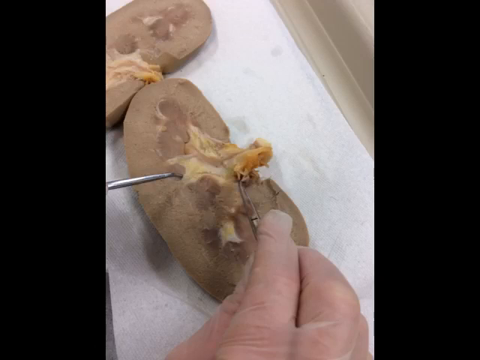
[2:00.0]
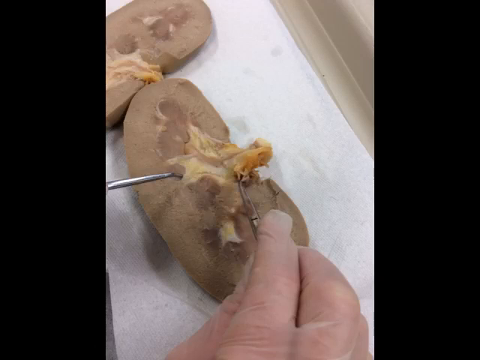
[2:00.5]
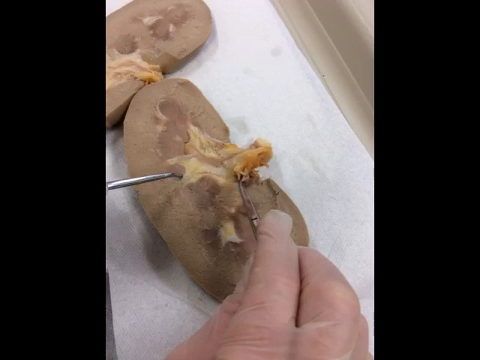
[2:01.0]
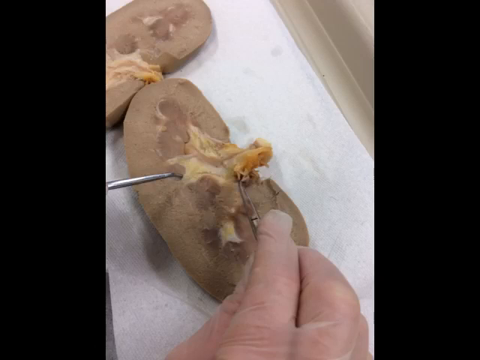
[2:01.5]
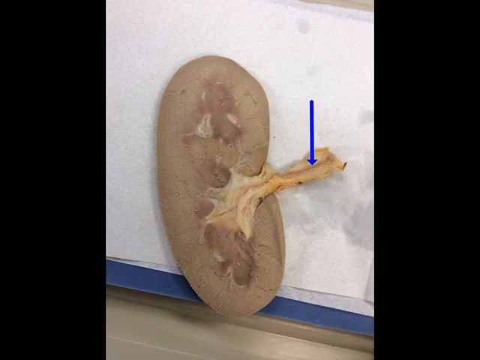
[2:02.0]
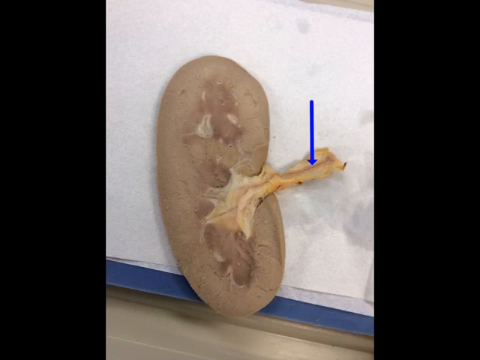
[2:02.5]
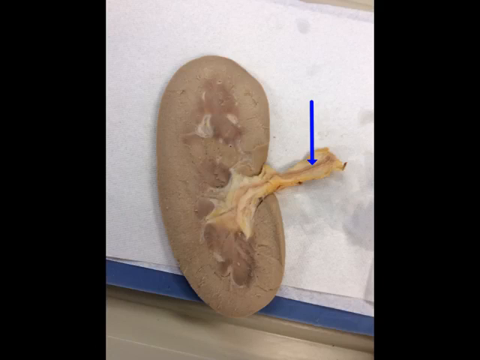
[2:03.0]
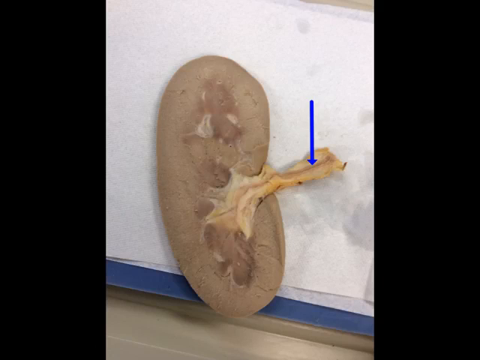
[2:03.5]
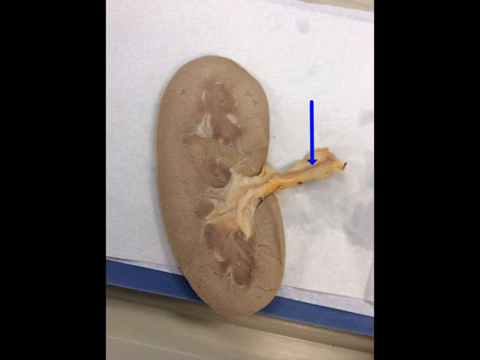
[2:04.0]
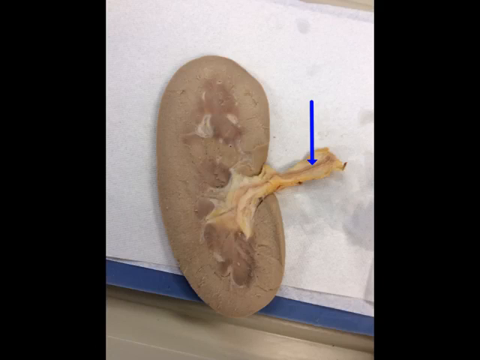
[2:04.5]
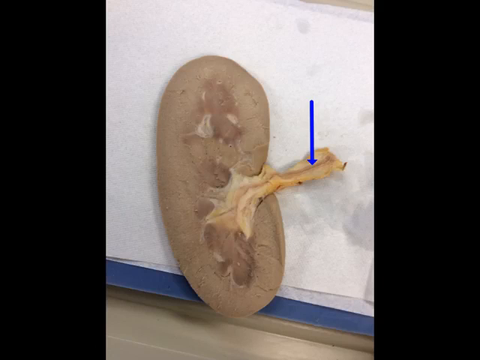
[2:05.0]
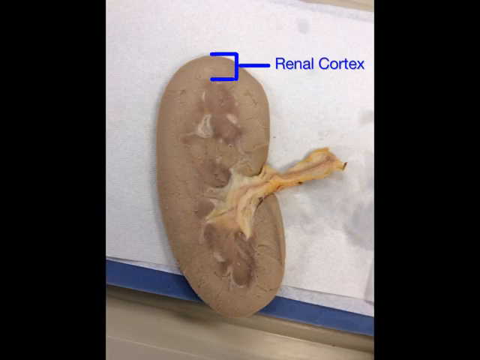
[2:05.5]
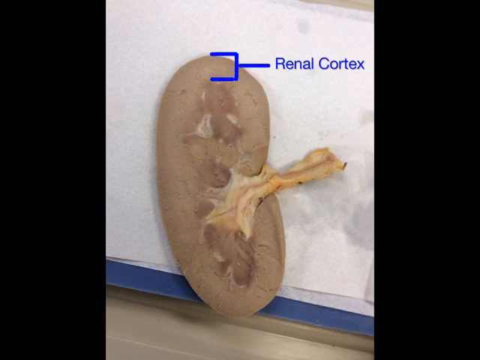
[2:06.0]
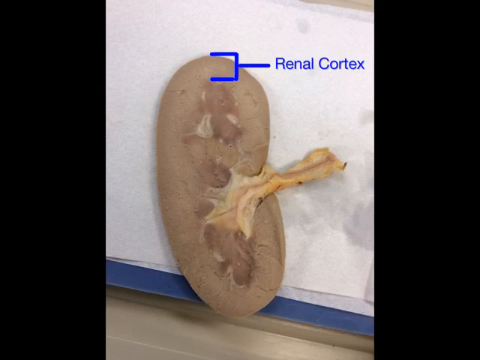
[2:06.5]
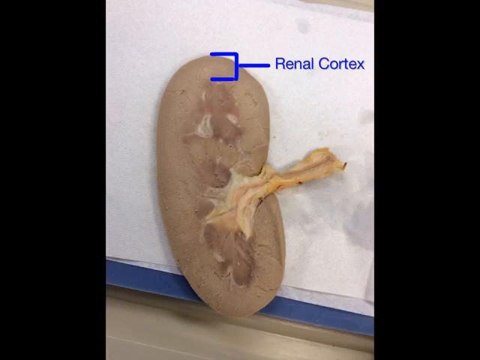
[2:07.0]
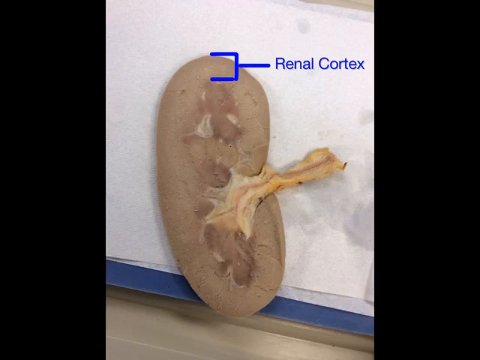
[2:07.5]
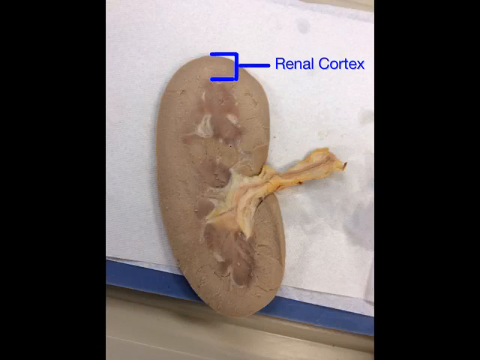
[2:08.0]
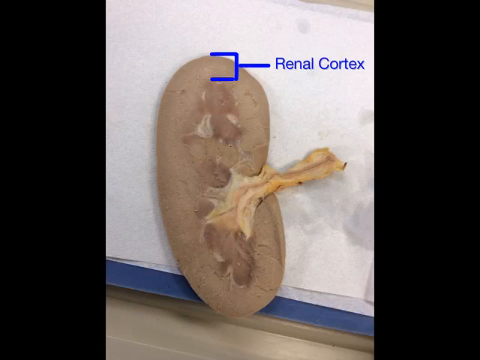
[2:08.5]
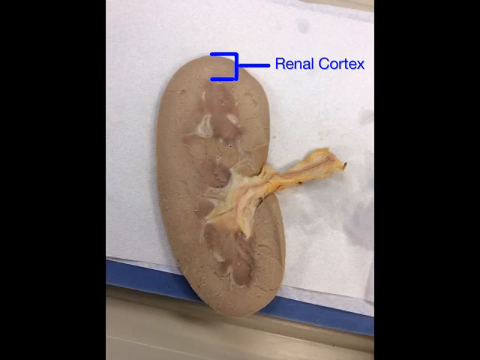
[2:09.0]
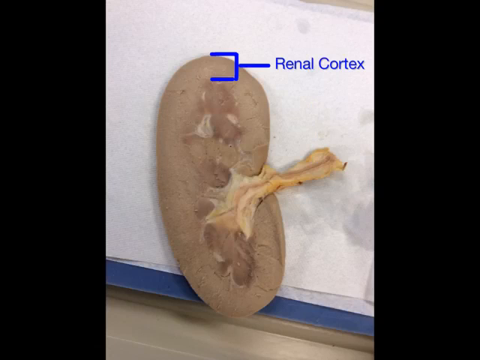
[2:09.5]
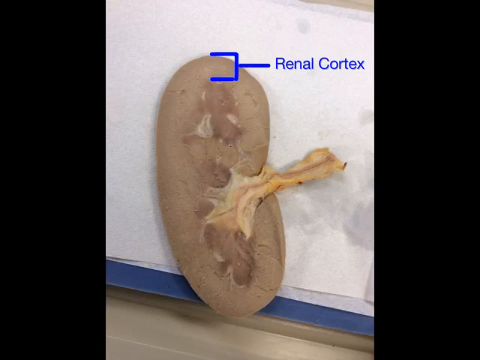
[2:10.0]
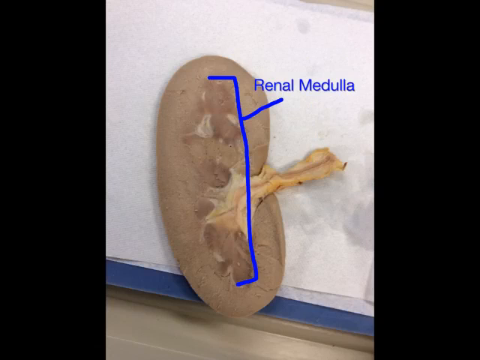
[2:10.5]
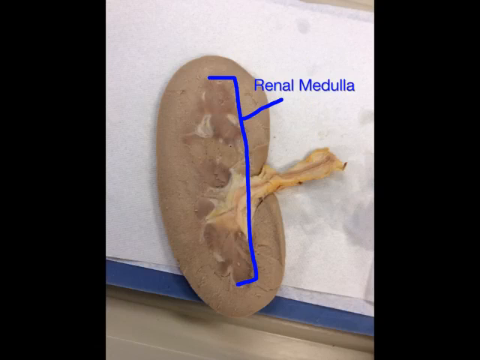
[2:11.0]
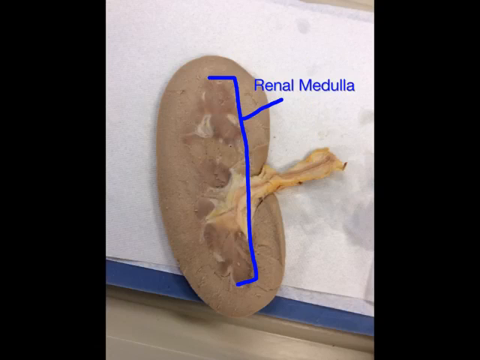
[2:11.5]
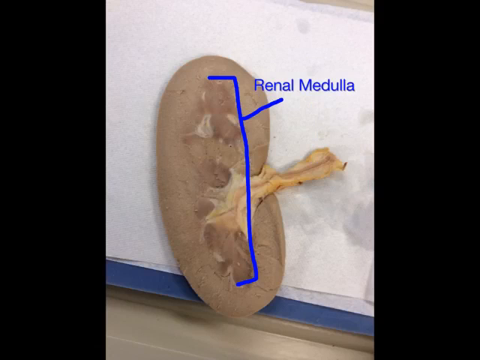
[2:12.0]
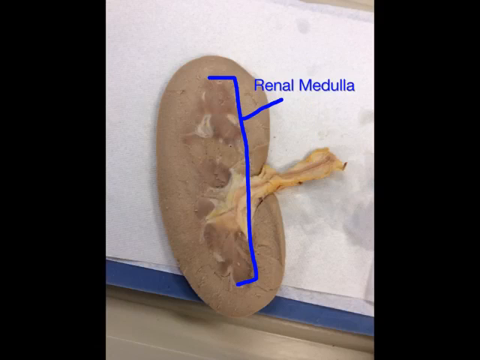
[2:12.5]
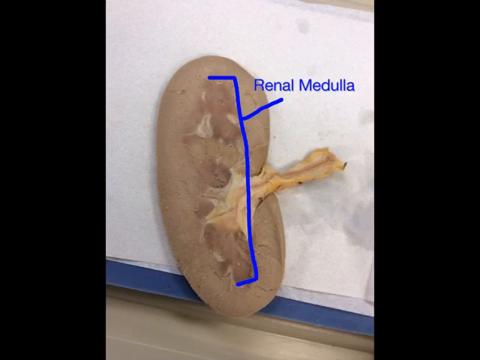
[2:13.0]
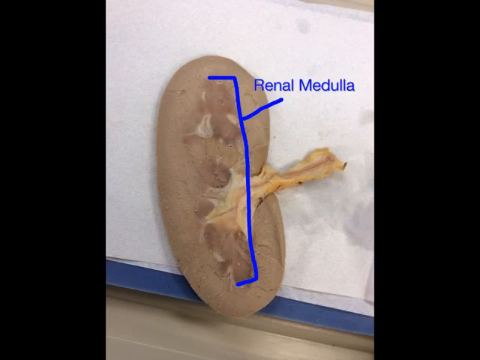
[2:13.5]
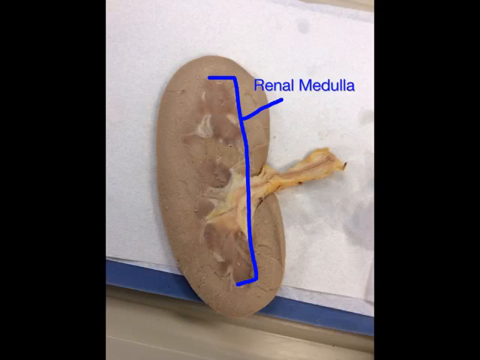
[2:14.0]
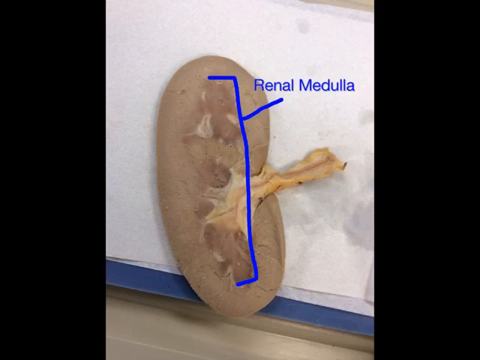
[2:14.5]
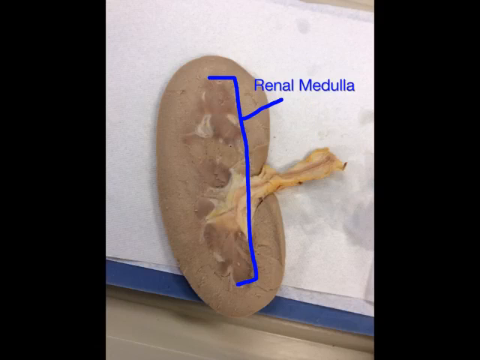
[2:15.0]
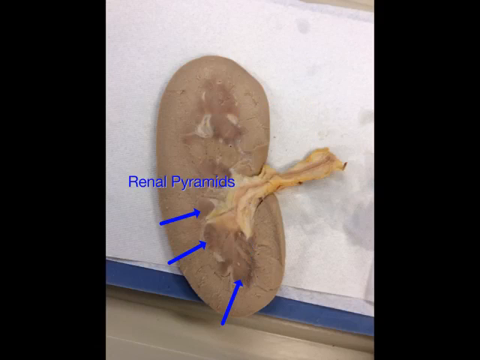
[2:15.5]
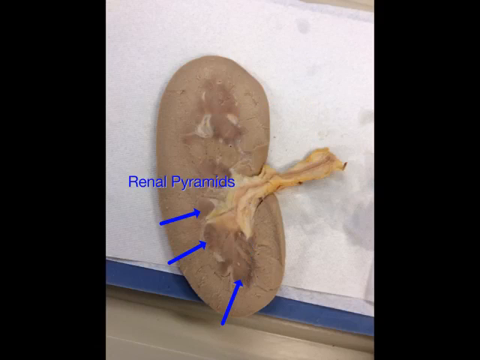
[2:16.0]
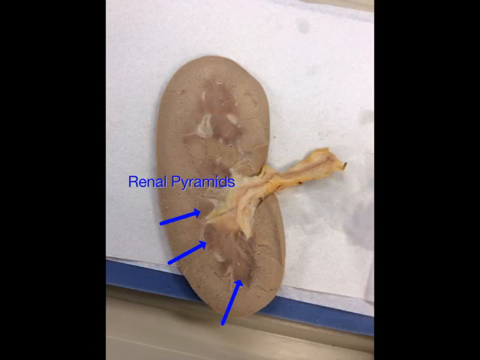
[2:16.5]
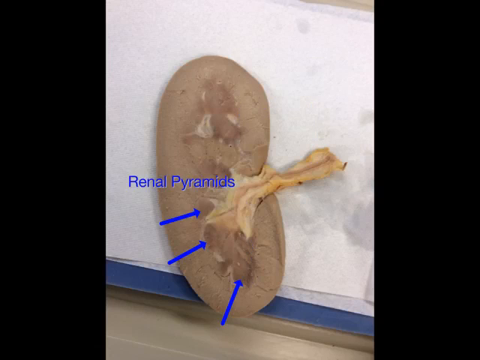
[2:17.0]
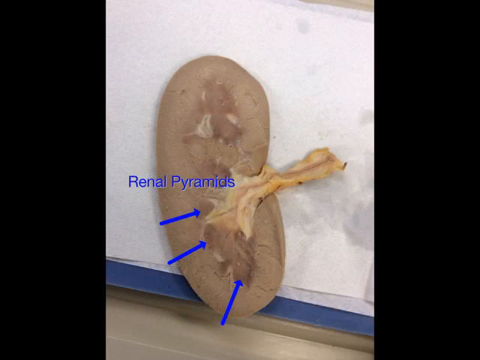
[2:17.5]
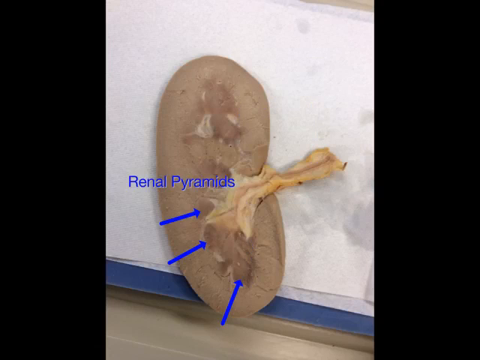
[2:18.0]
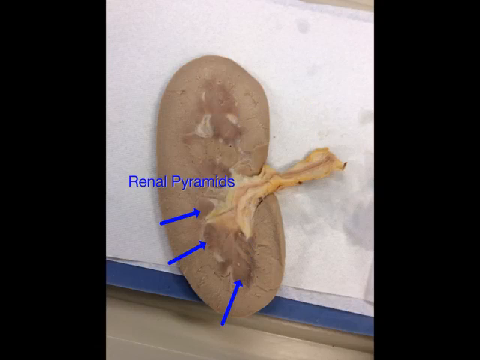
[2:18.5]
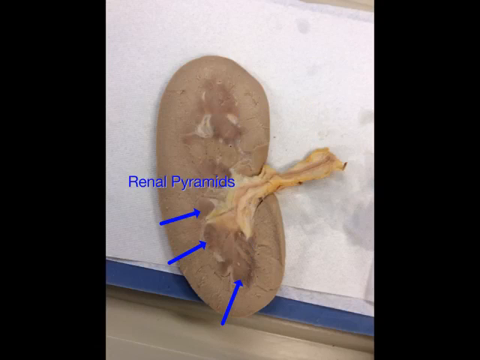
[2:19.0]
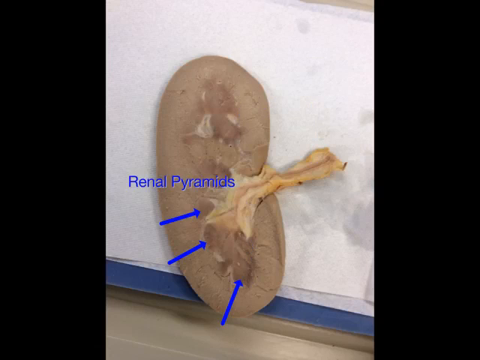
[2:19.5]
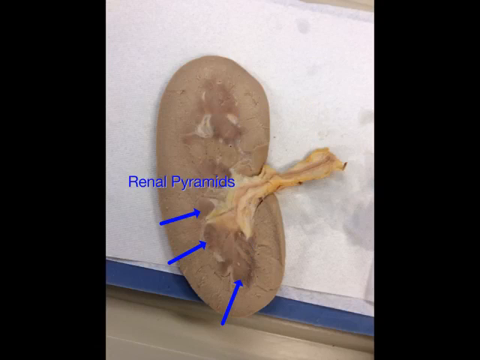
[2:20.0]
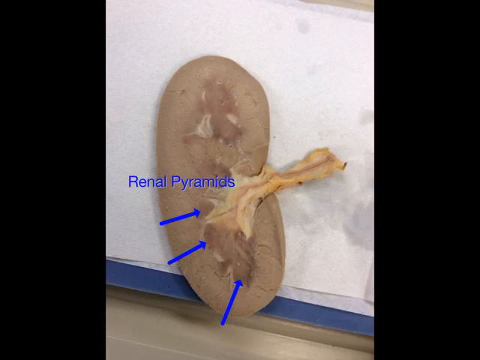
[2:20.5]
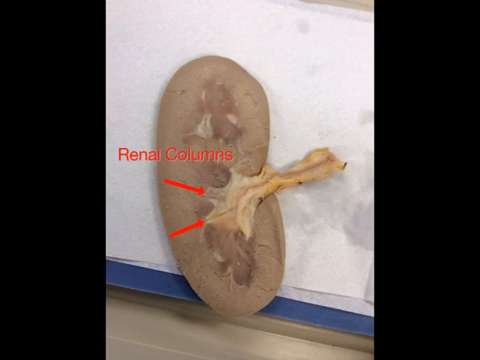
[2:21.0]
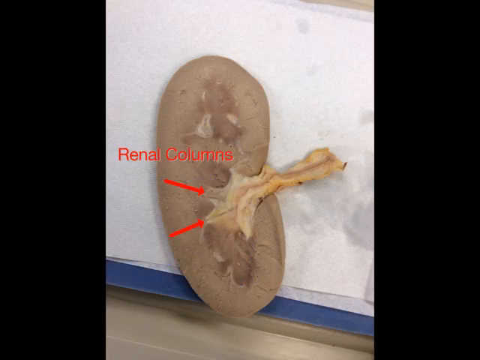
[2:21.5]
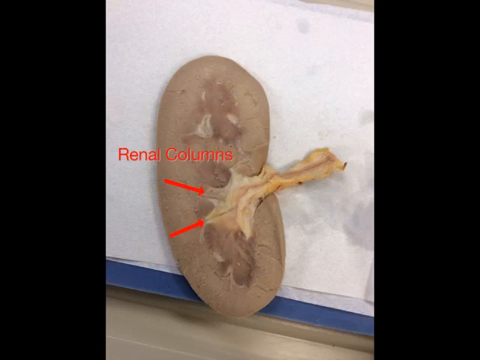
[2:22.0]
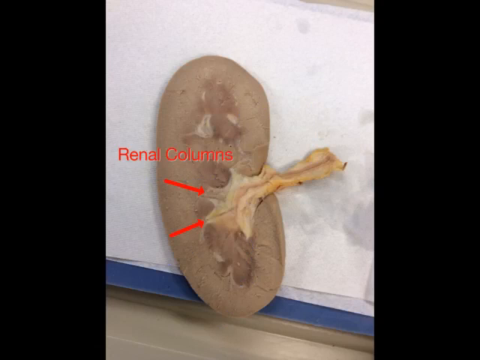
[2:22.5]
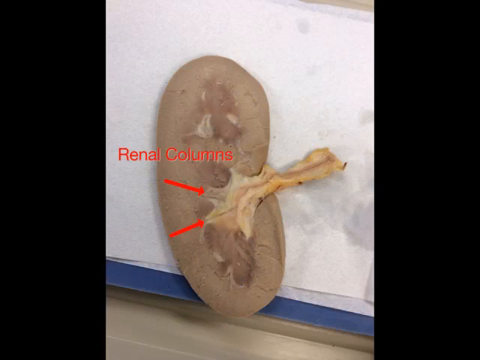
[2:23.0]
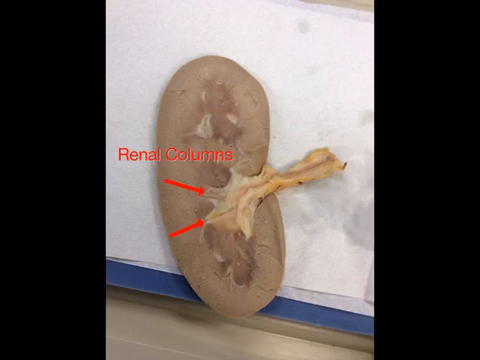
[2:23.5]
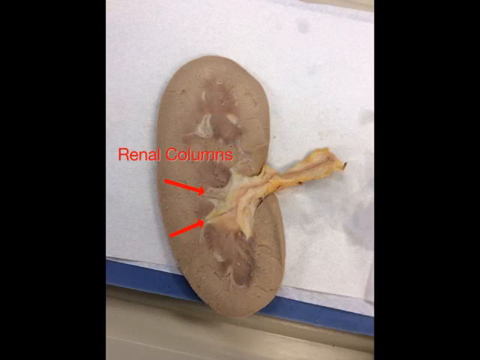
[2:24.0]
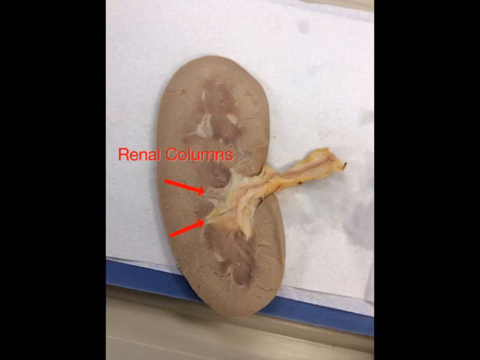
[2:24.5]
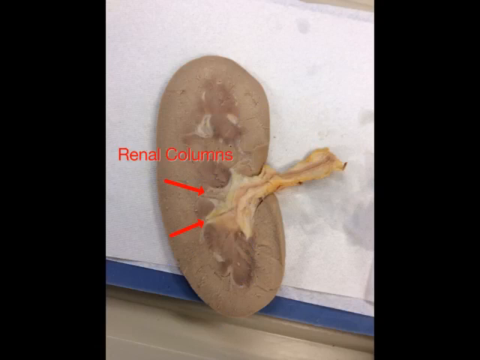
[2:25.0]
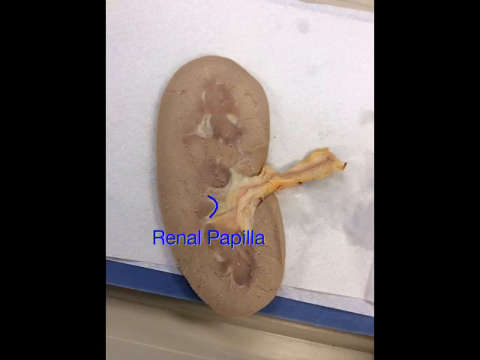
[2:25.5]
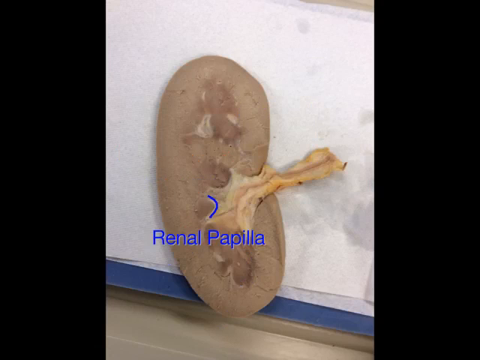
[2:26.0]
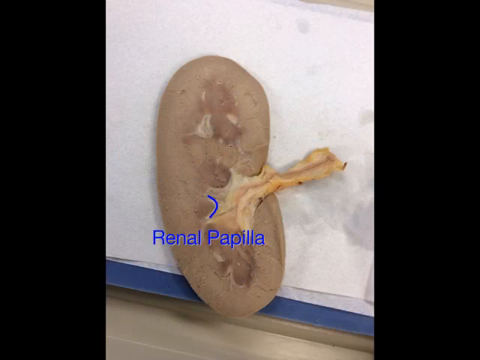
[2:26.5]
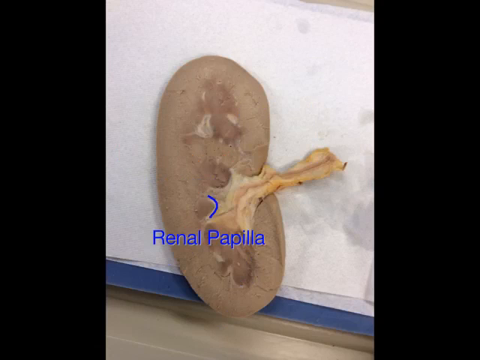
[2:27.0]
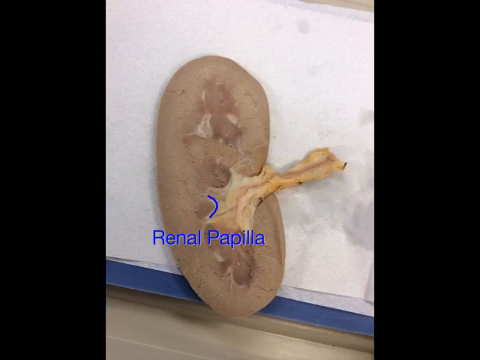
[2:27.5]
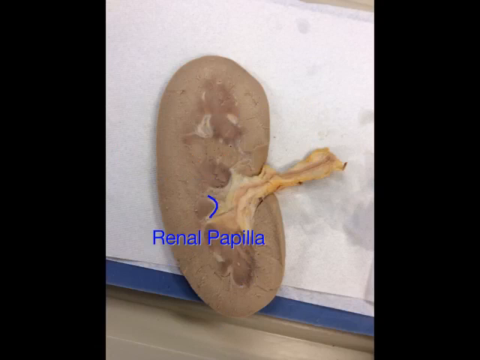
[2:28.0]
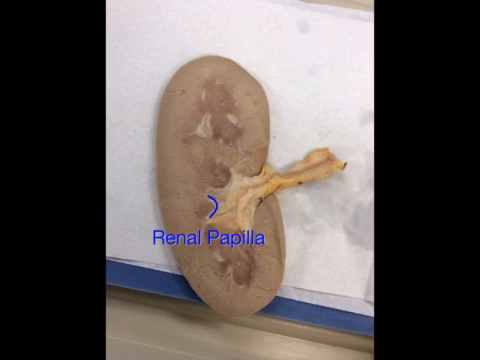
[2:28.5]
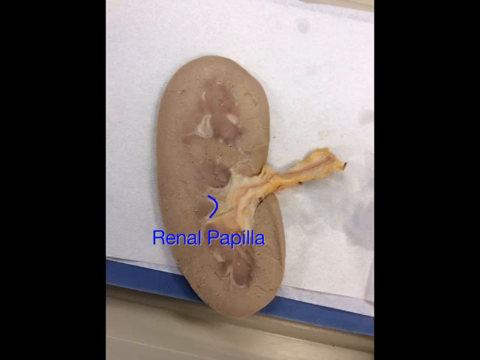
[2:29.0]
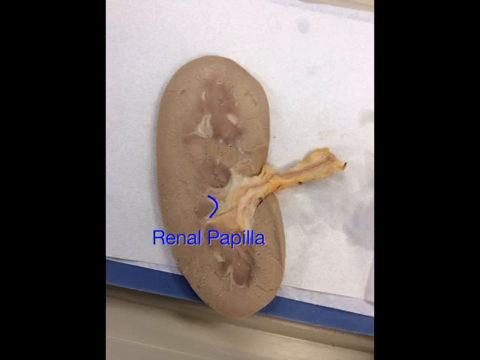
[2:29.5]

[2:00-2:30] The kidney, cut in half, lies on the table while the person's hands, holding medical tools, dissect it. Next, the left half lies on the table, with a blue arrow pointing to the part protruding out to the right of the kidney. Text reading "renal cortex" points to the top area of the kidney. The next label, "renal medulla," marks the very center part of the kidney, and the little air-pocket-looking things on the inside of the kidney are the renal pyramids. Then two red arrows point to the renal columns inside the kidney, and finally the renal papilla is shown at the end of the very center of the kidney.